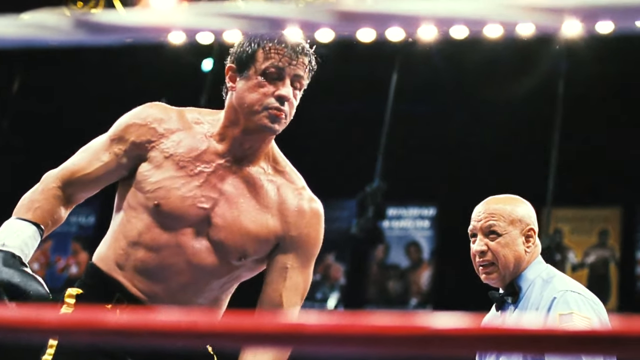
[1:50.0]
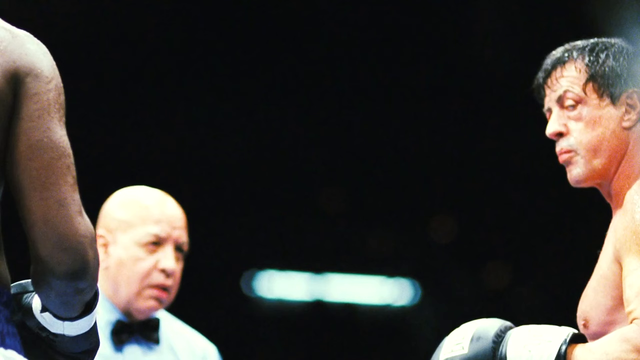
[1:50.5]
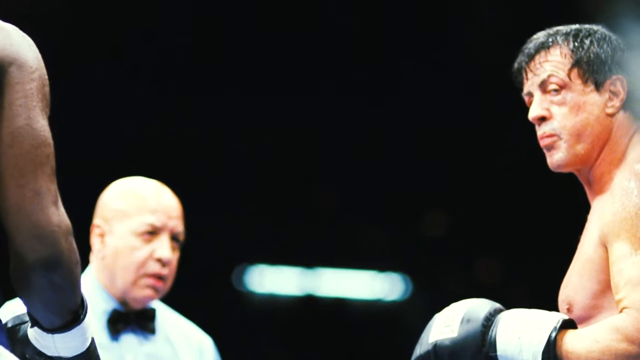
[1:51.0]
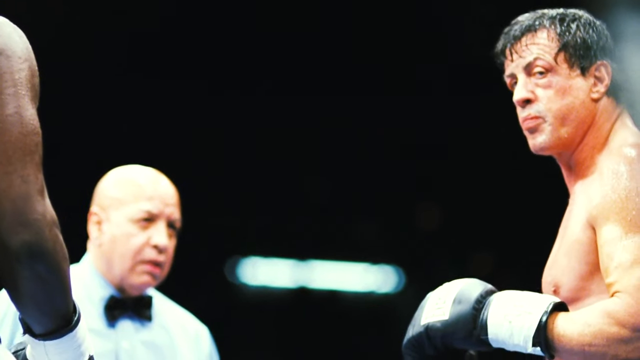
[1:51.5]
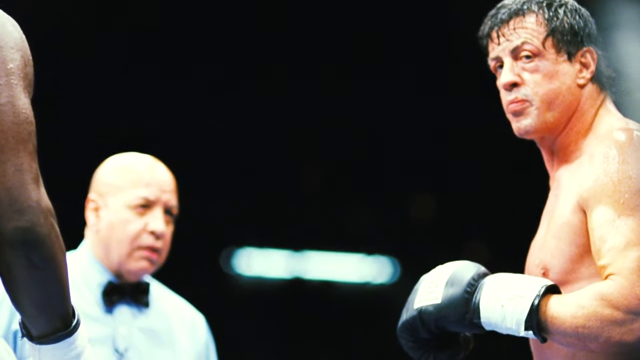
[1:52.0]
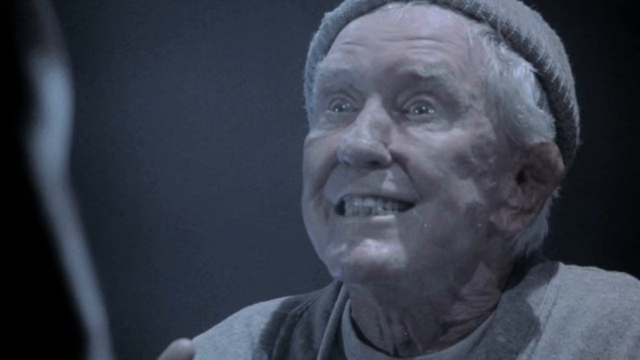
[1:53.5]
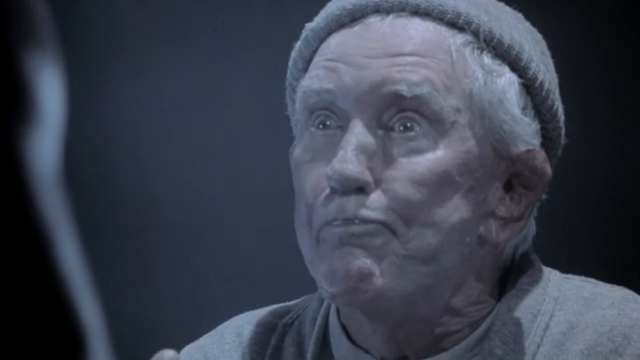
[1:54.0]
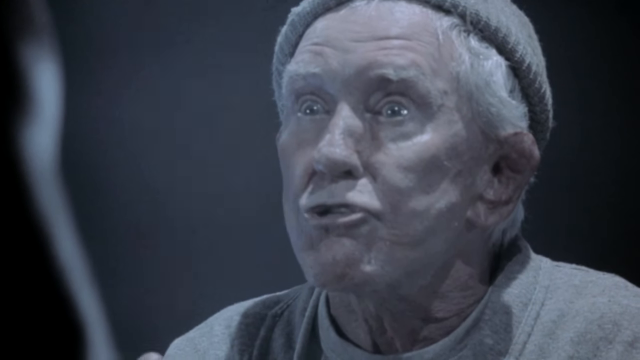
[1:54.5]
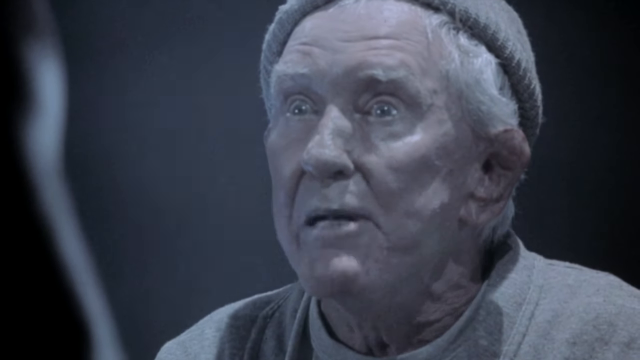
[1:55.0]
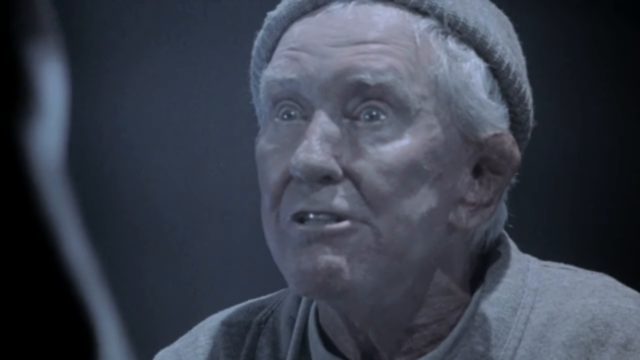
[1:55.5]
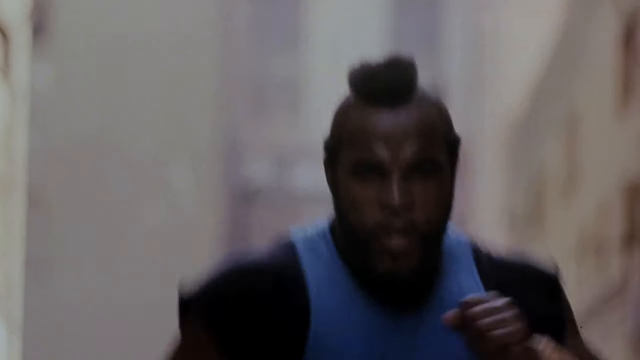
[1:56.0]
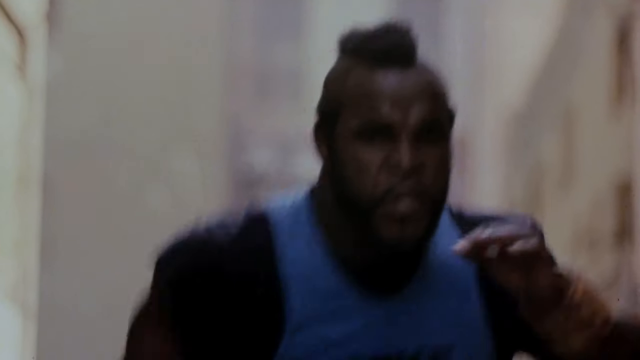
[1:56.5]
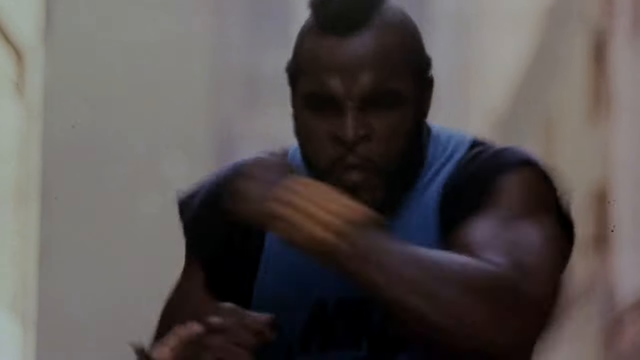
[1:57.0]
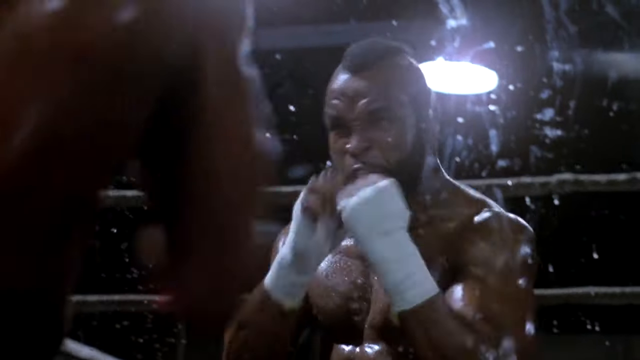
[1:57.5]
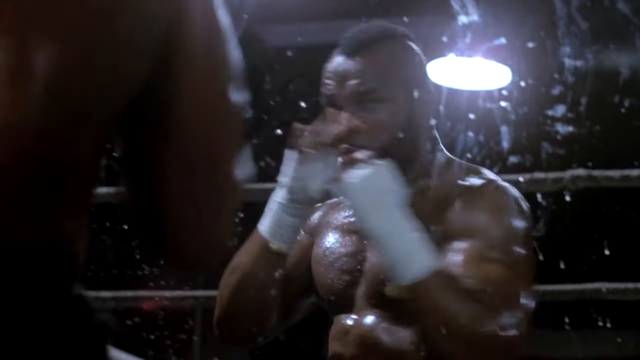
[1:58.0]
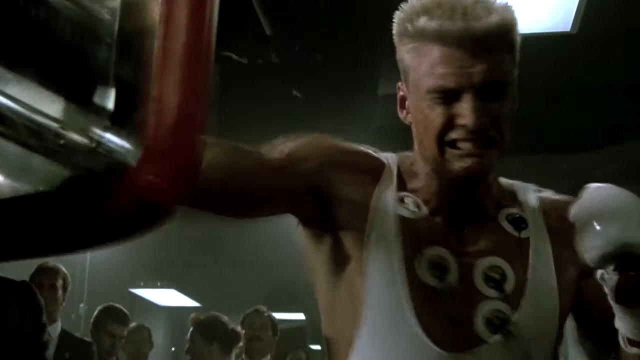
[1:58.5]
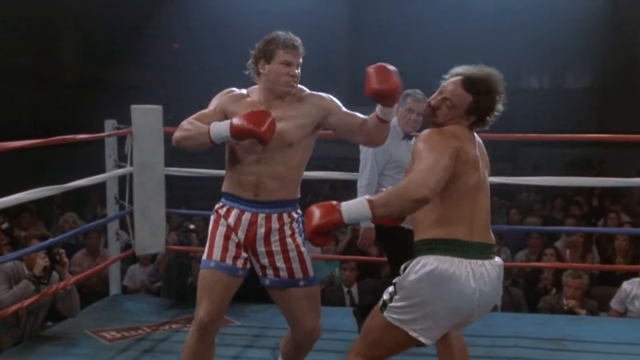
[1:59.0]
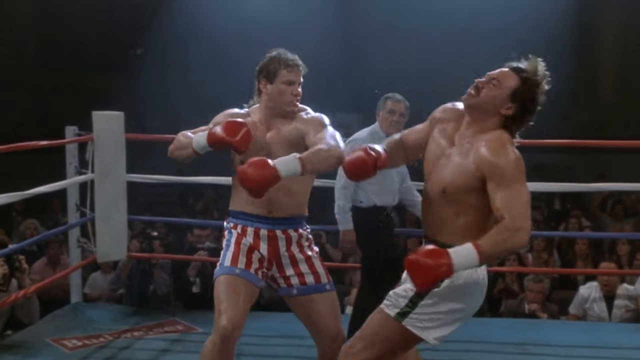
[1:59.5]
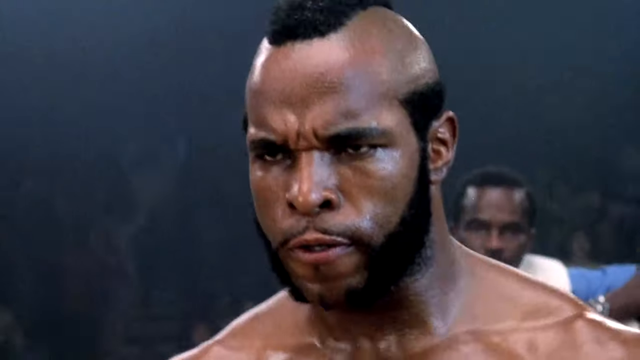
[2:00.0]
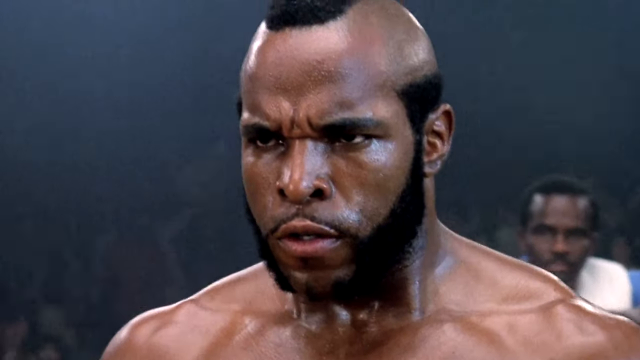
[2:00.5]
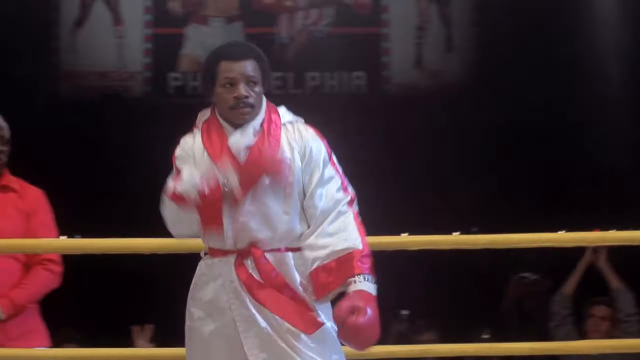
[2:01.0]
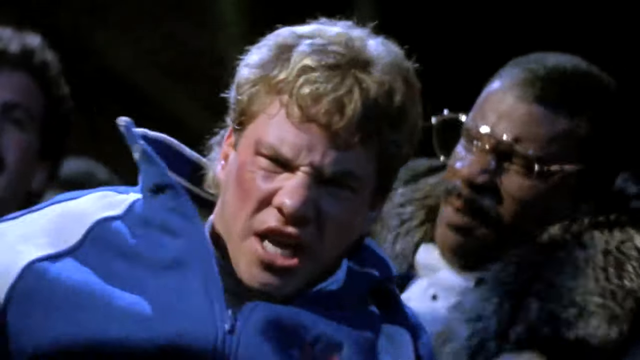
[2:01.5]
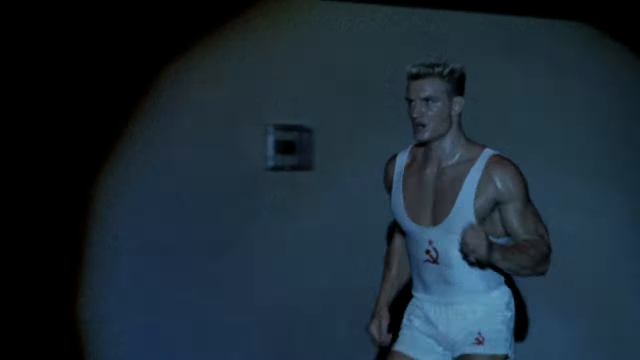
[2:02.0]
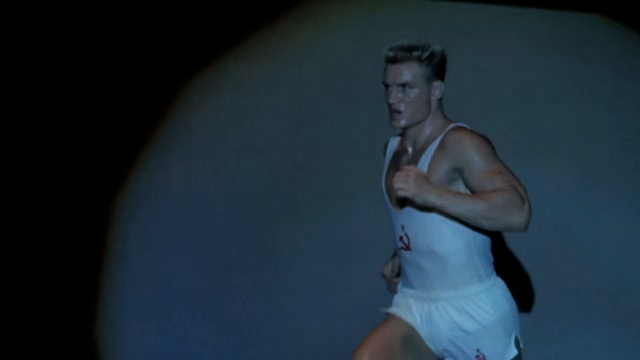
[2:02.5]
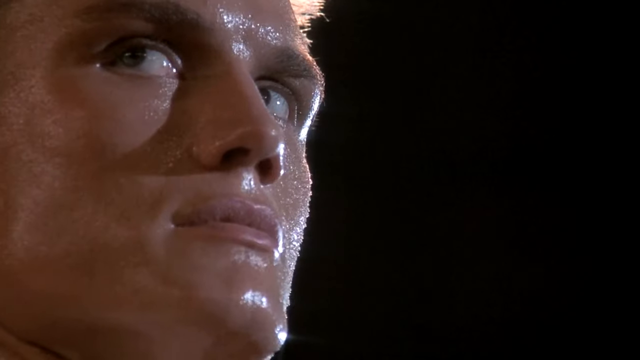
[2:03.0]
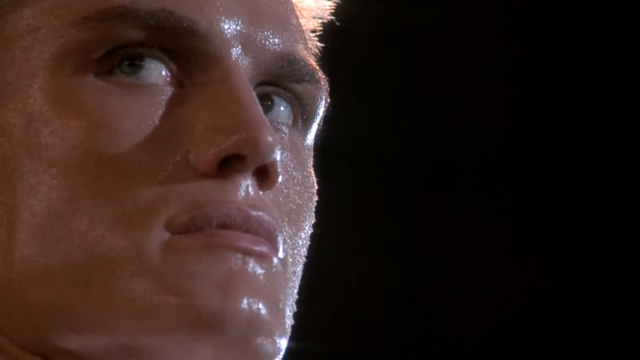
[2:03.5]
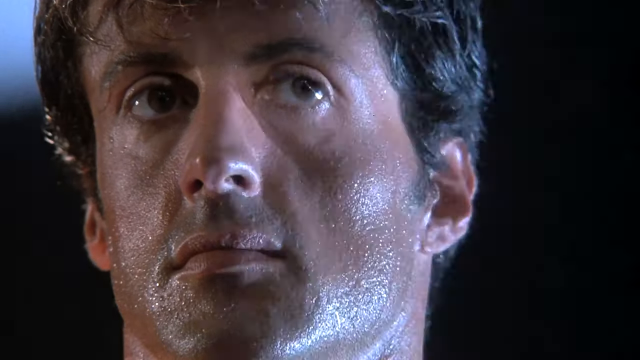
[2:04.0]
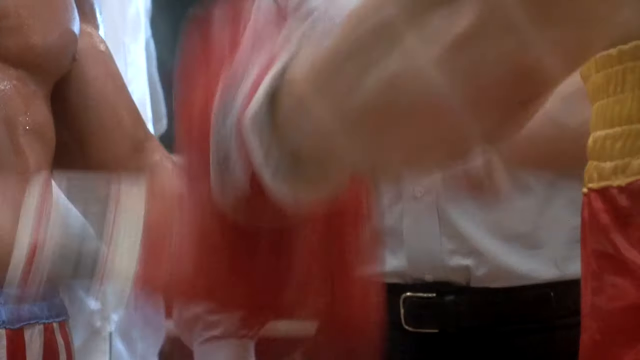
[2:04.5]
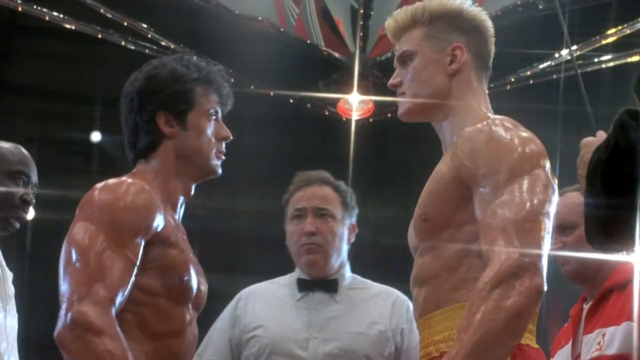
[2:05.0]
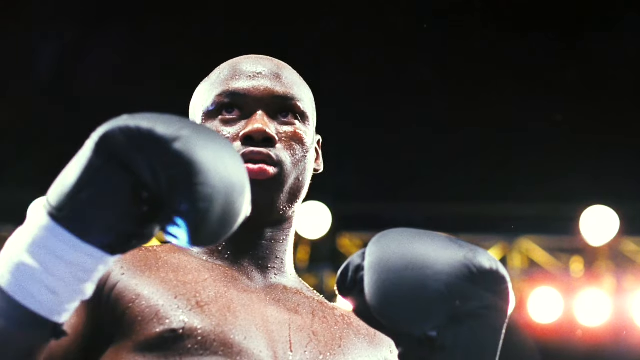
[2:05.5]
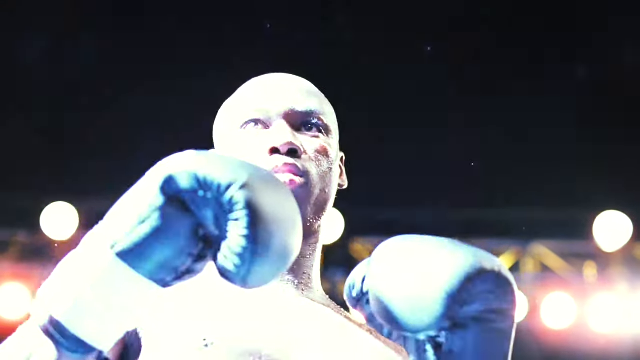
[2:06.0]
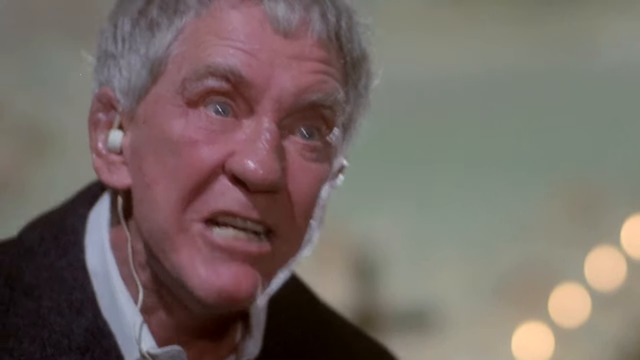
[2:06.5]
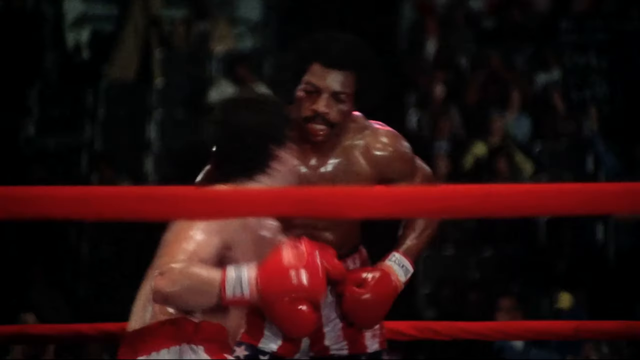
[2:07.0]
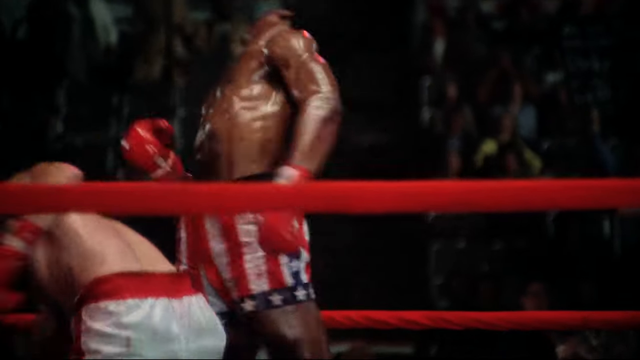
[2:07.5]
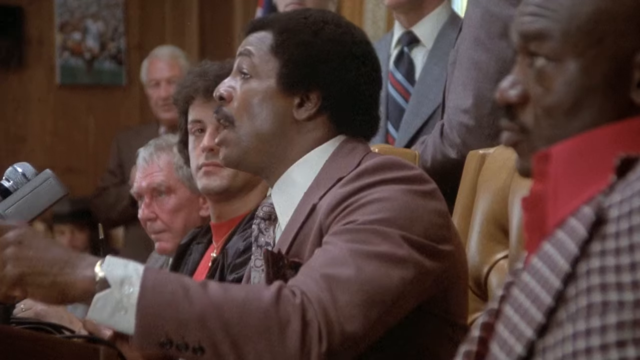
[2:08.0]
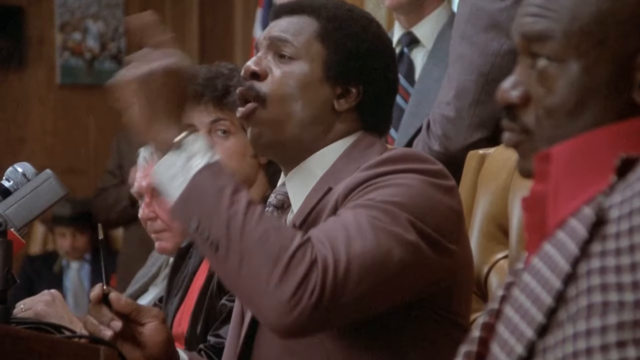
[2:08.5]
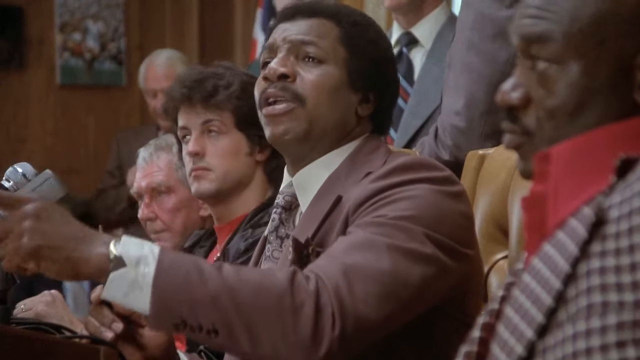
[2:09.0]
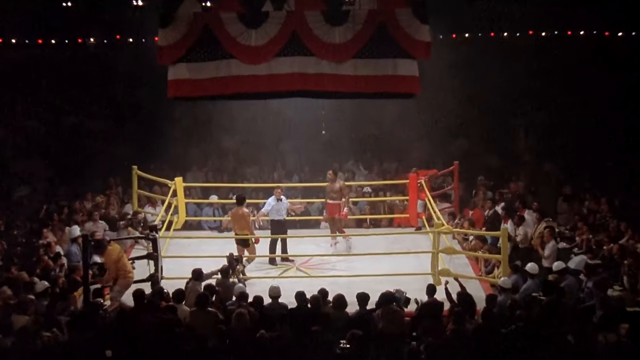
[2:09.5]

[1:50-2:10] Different boxing scenes continue, now a new one: the man faces another opponent in the ring, and the referee tries to control the fight. The video shifts to the man training, jogging and running at night. Several fights follow in which the main character faces different opponents and knocks them out. An old man angrily advises him. The faces of two fierce boxers are shown, who seem to be knocking other fighters out, and a bald referee tries to control the fighting.